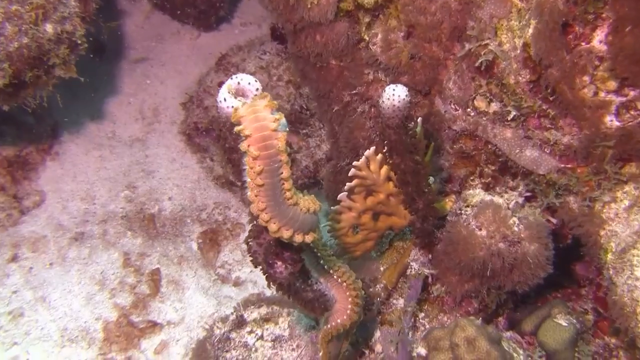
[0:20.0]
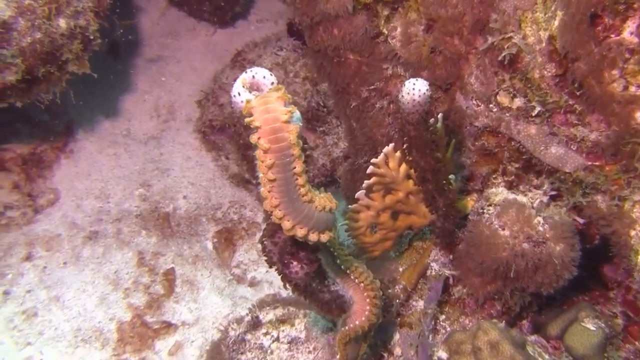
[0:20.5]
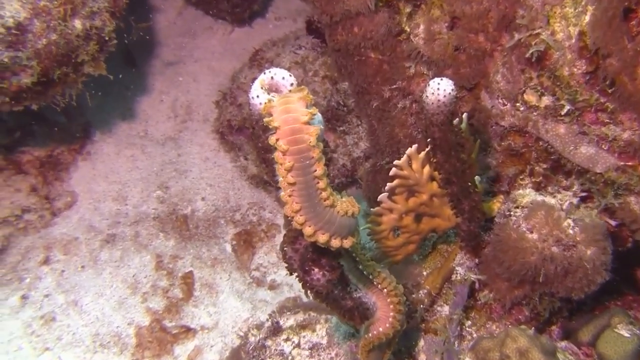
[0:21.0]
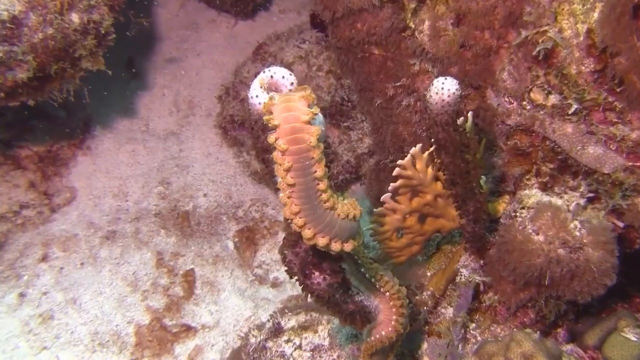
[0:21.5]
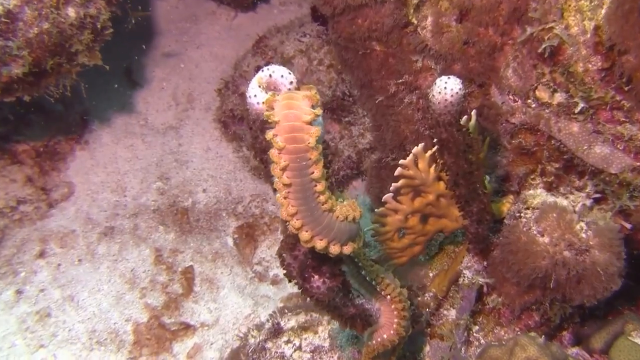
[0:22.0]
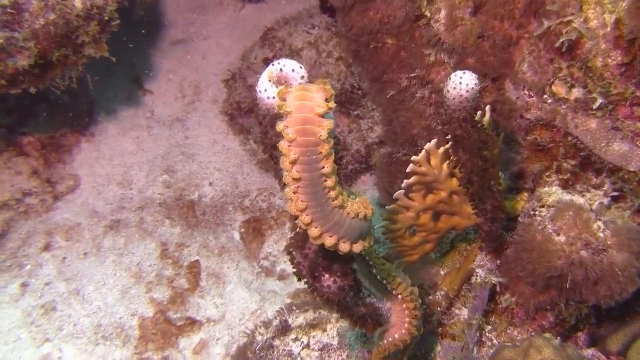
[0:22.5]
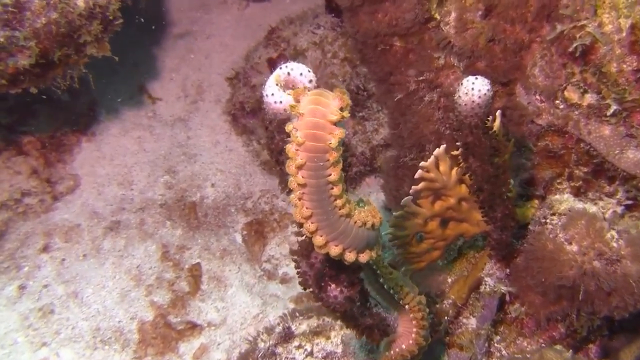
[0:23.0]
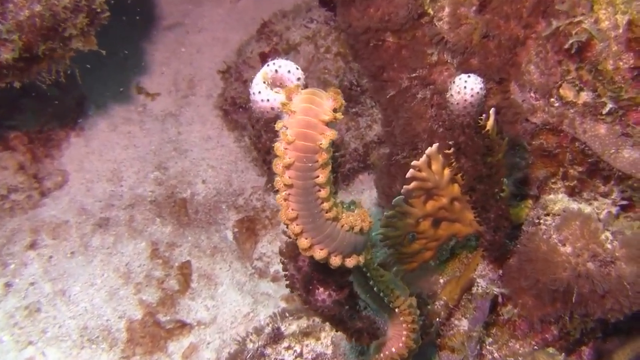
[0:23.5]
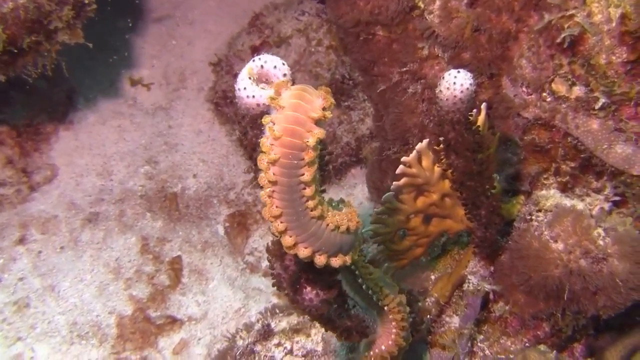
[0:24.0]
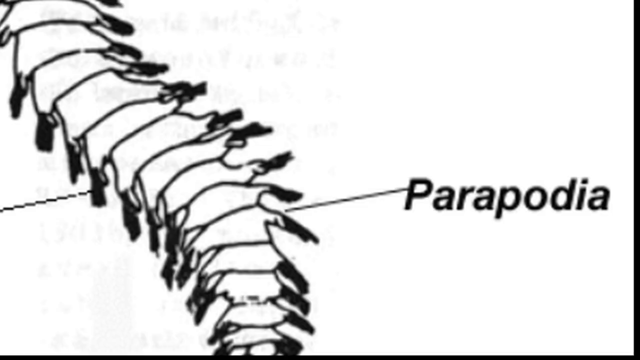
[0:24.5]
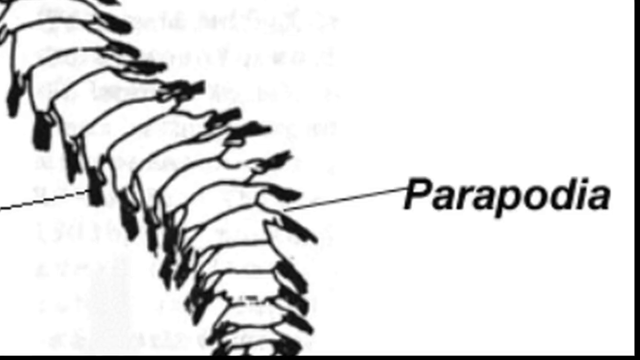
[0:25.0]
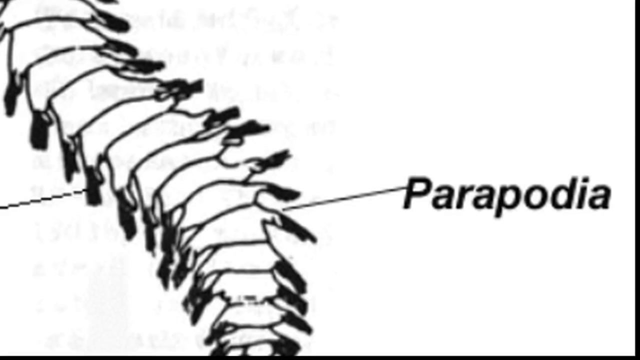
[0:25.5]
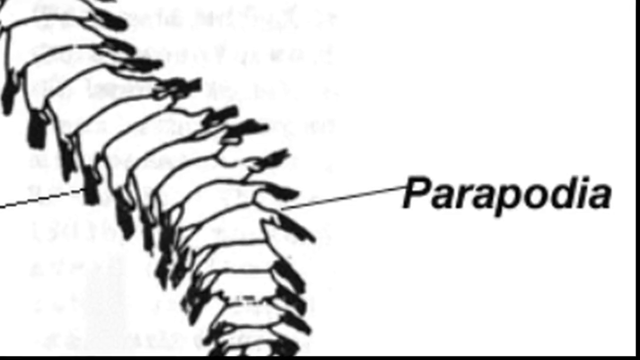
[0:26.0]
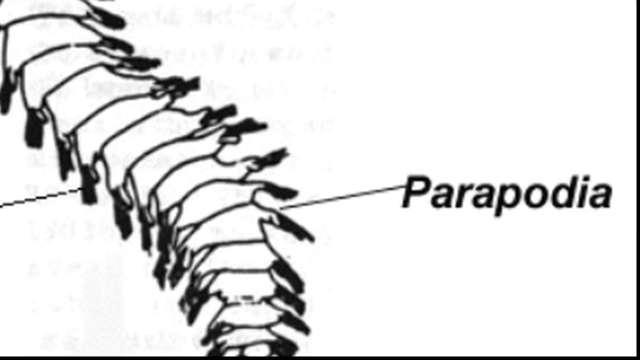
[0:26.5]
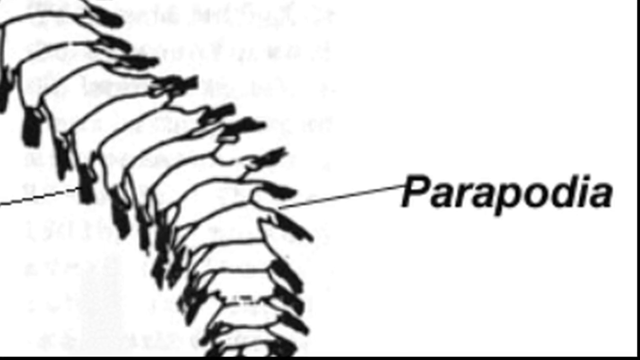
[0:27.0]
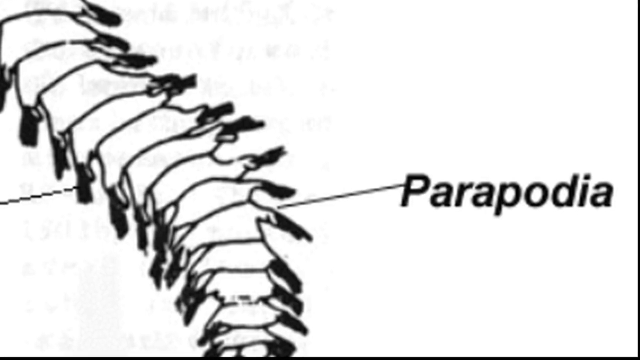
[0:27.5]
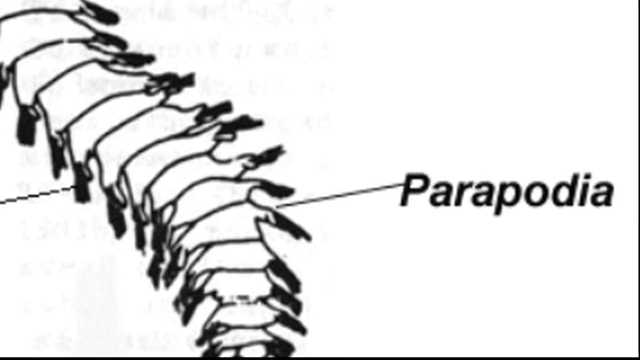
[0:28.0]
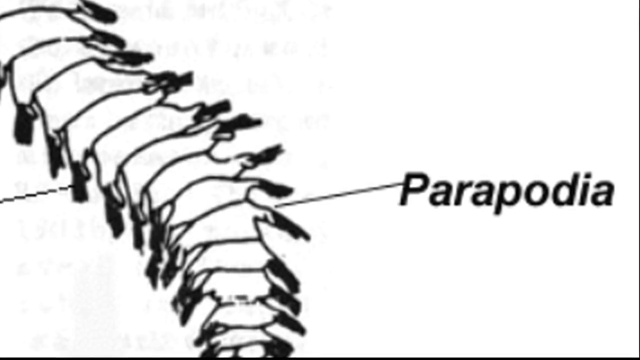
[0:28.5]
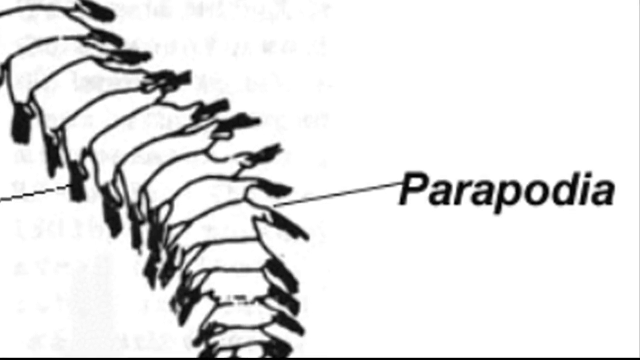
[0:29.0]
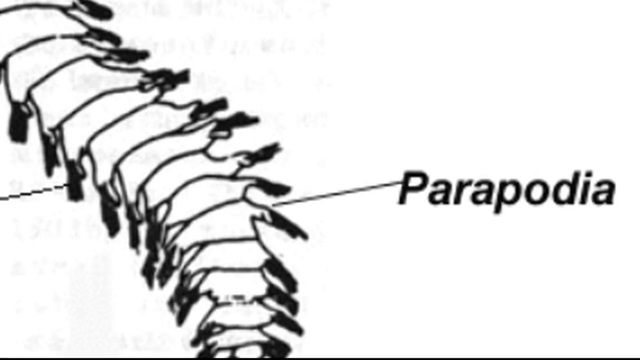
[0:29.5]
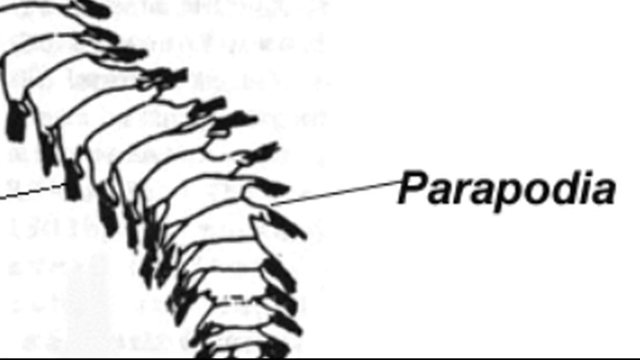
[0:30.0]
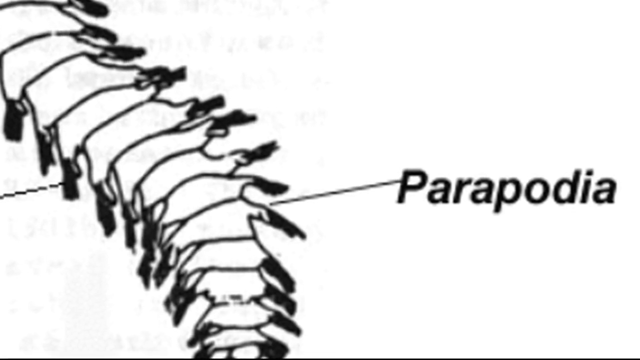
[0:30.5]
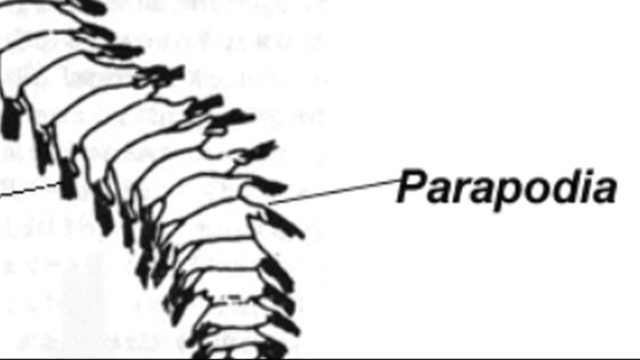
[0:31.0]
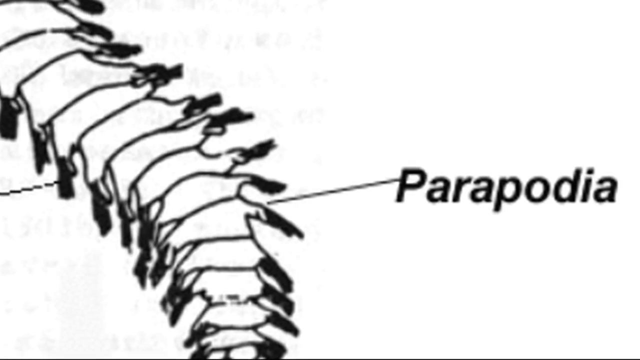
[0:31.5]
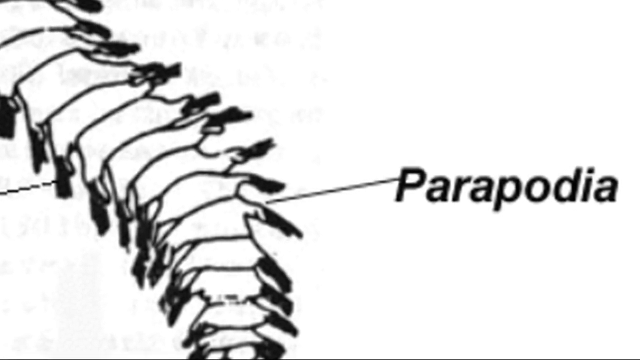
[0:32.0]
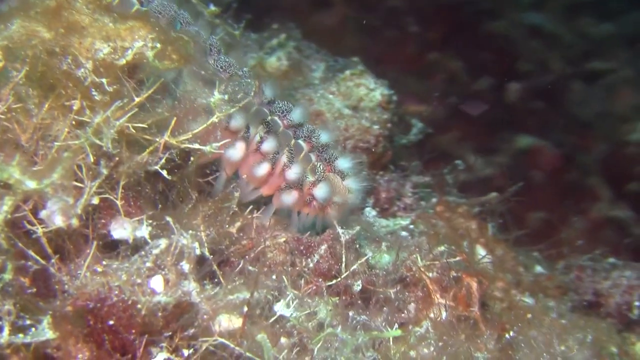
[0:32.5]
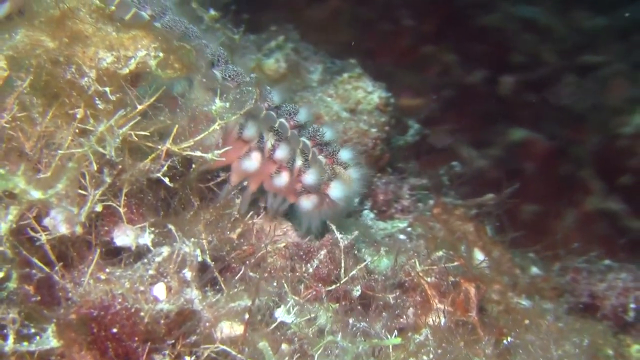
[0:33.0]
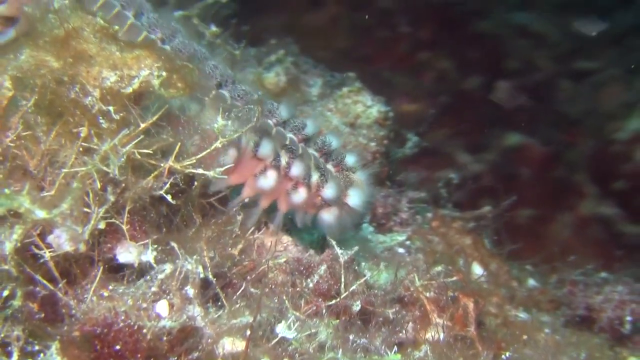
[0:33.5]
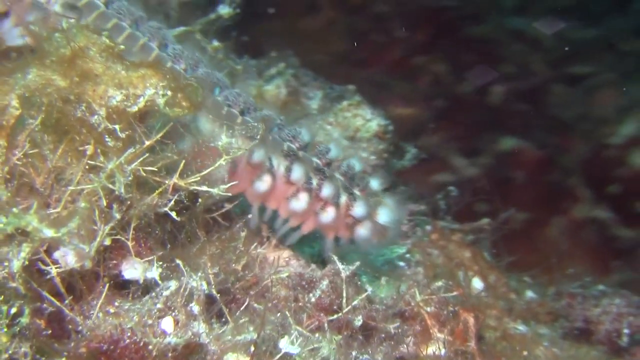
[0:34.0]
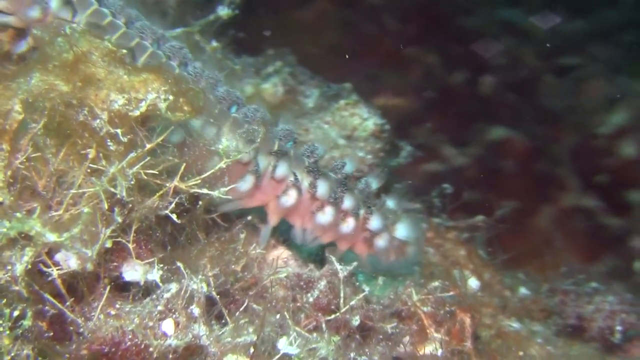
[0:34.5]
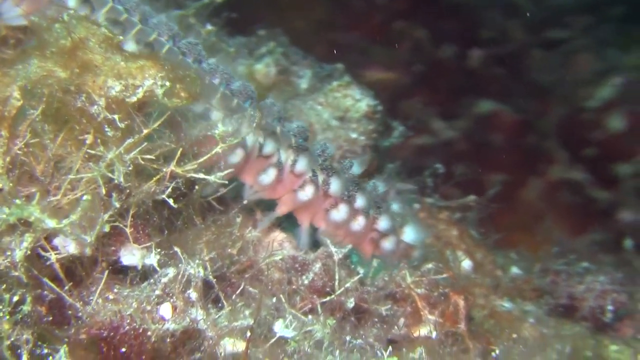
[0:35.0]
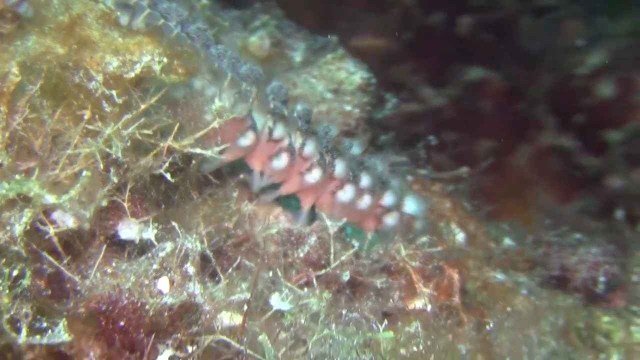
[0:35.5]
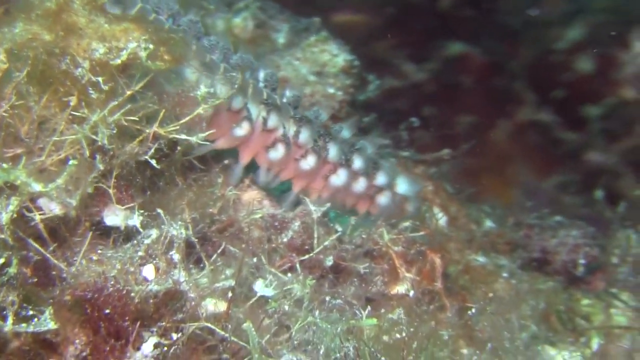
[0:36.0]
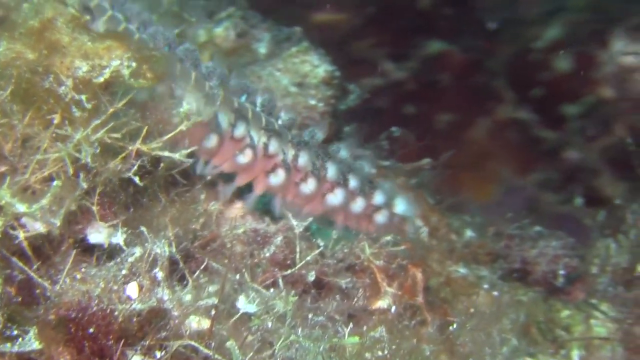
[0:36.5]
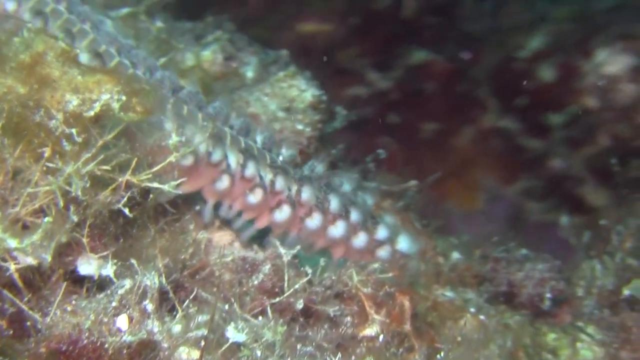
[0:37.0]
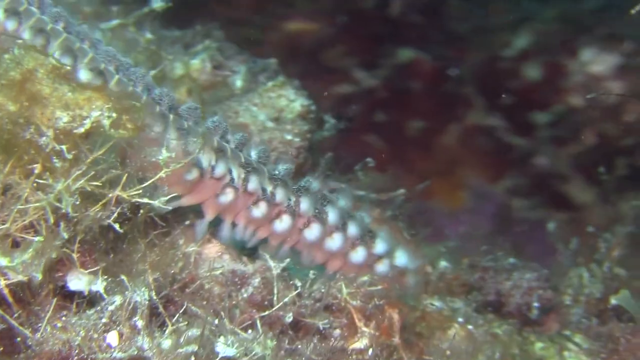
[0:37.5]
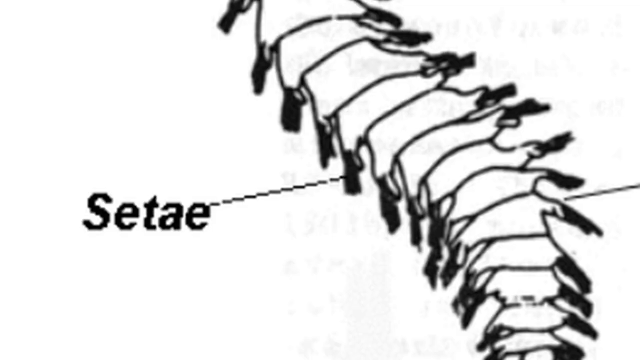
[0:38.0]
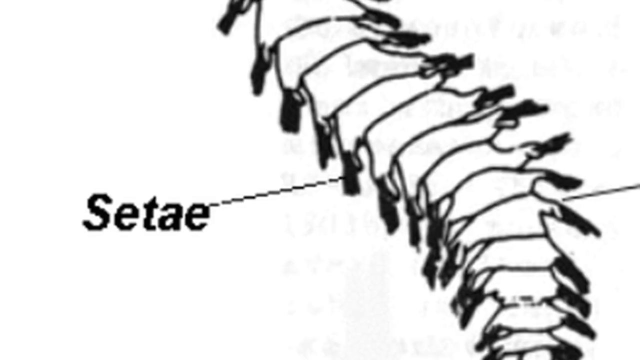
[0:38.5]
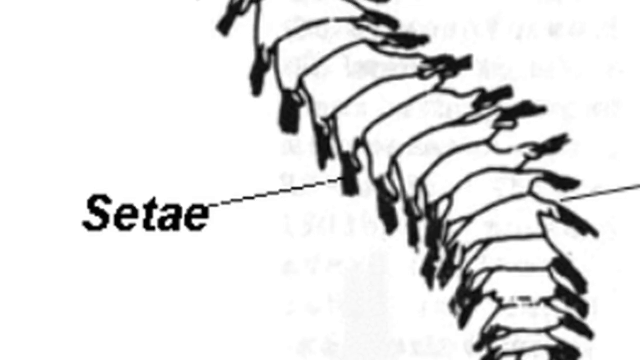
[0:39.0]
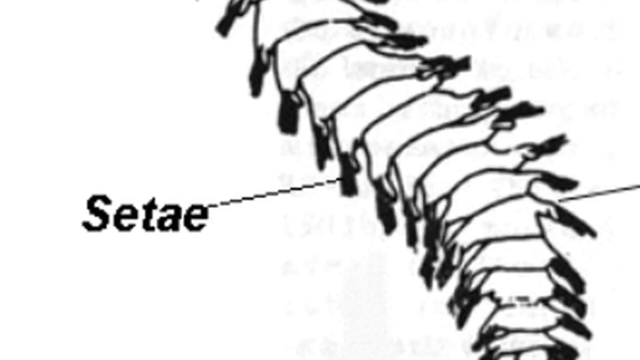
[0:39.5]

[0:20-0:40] What looks like another centipede-type creature is underwater. This one is a lot wider and appears to be a bit longer than the previous one. It crawls on top of a dark piece of coral that has a white tip at the end; the creature sticks its face into the little white part, pulls it out, and turns toward the right side, looking like it may crawl down the bottom right side. The video cuts to what looks like a black and white drawing, where the body of the creature crawls up toward the top left side. Toward the center is some text with an arrow, and at the end of the arrow it says "Parapodia." The camera zooms in on that name and holds there for multiple seconds, then cuts to more footage. This looks like the same footage as before, with the pink-legged centipede creature underwater crawling down toward the bottom right of the screen, continuing to crawl. Then what looks like another drawing points out another area, with text that appears to say "setae," pointing to the little white leg area.